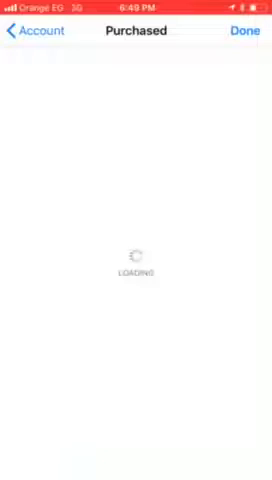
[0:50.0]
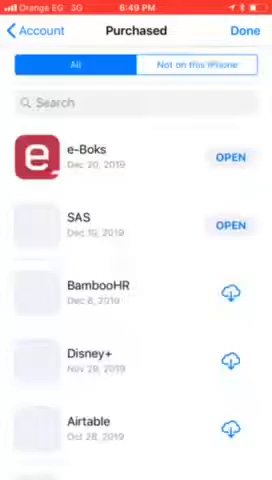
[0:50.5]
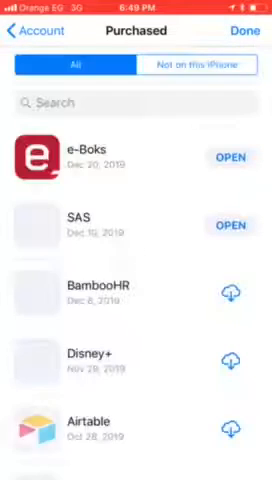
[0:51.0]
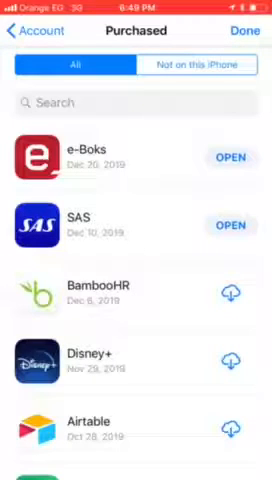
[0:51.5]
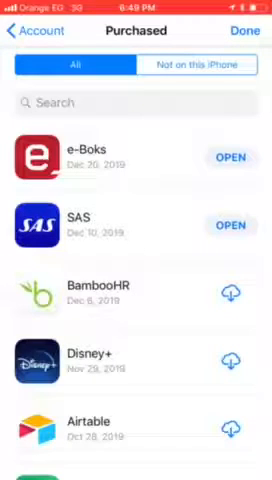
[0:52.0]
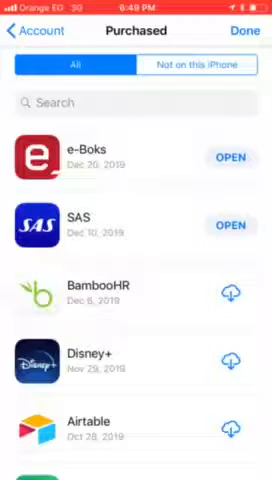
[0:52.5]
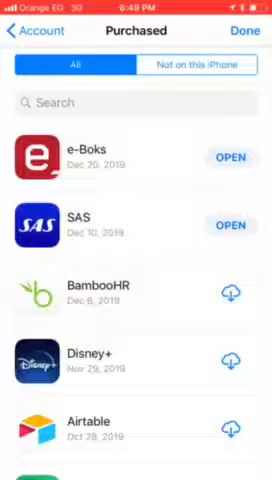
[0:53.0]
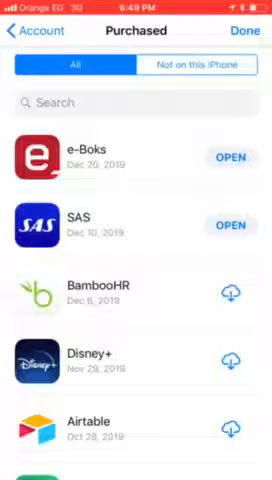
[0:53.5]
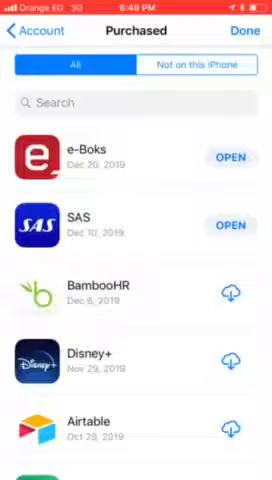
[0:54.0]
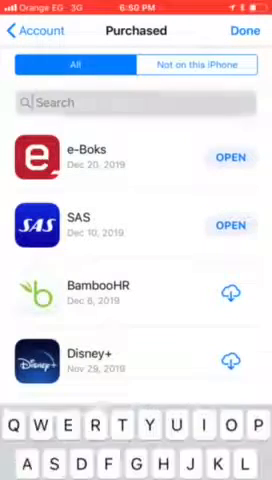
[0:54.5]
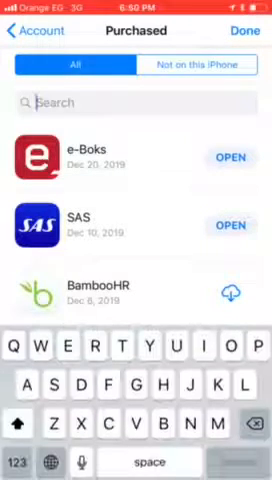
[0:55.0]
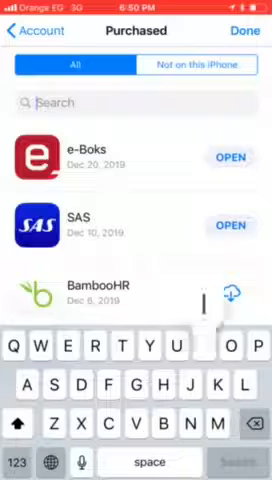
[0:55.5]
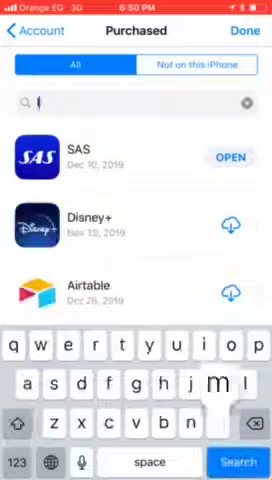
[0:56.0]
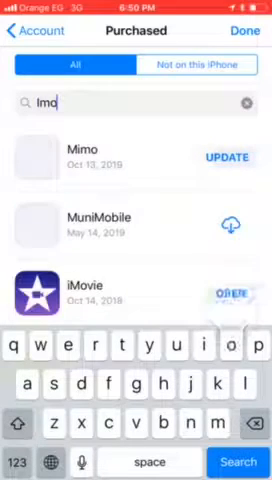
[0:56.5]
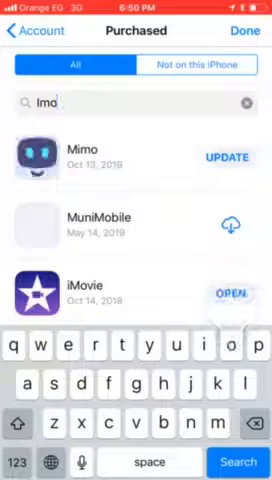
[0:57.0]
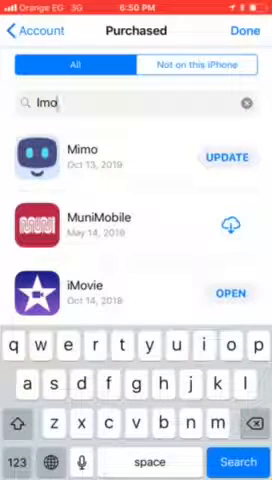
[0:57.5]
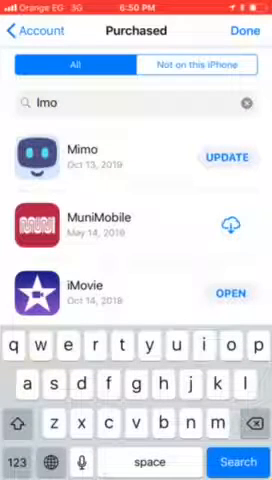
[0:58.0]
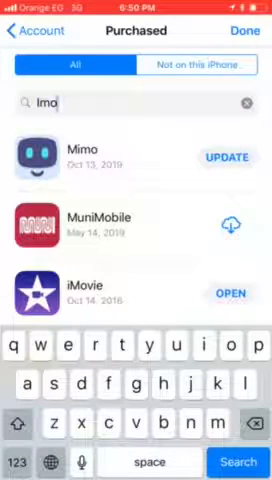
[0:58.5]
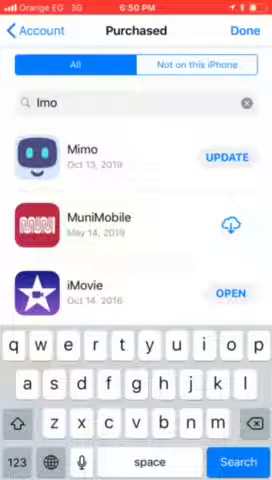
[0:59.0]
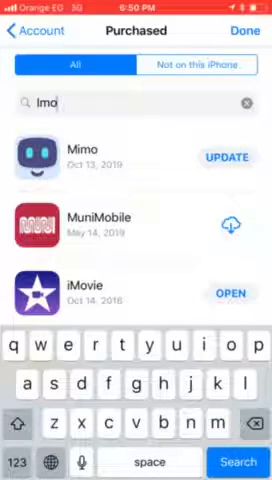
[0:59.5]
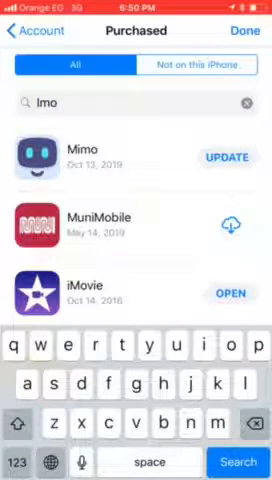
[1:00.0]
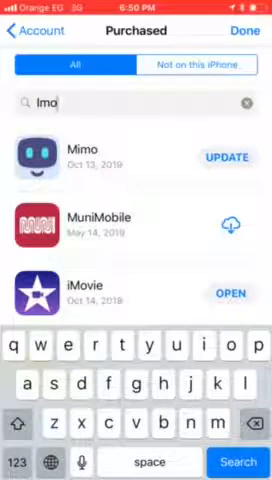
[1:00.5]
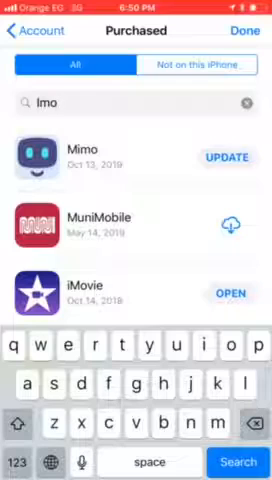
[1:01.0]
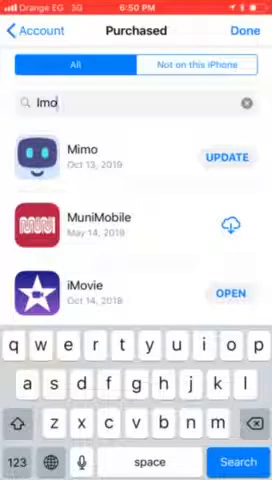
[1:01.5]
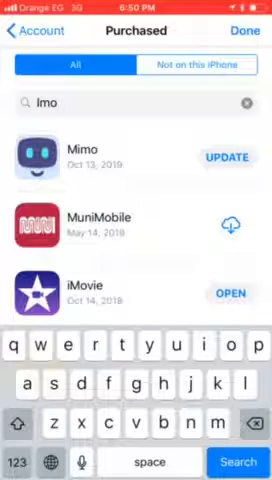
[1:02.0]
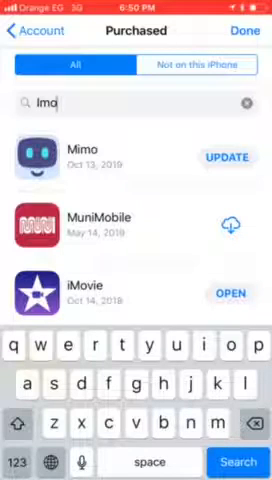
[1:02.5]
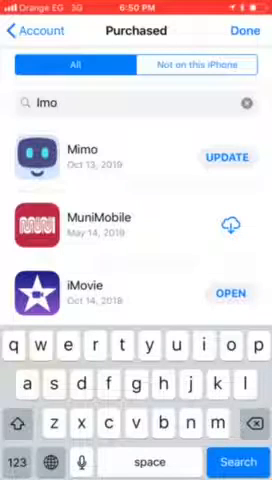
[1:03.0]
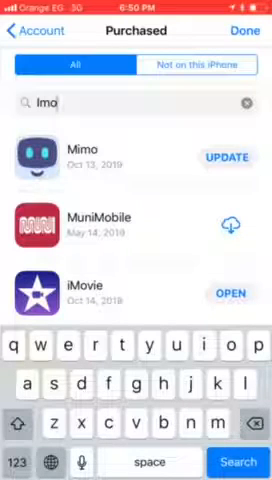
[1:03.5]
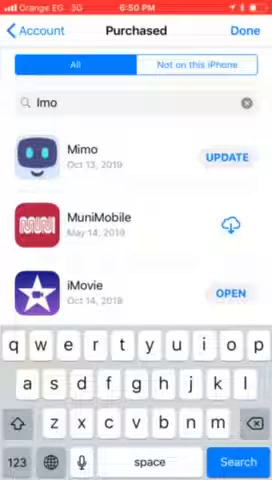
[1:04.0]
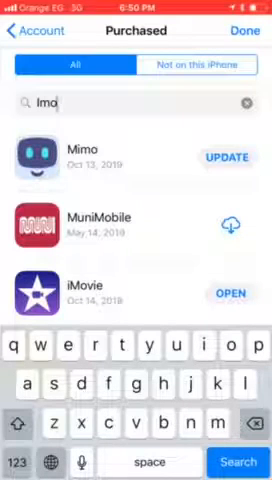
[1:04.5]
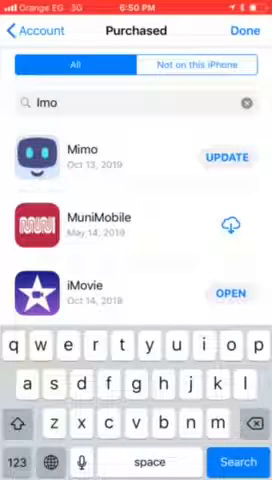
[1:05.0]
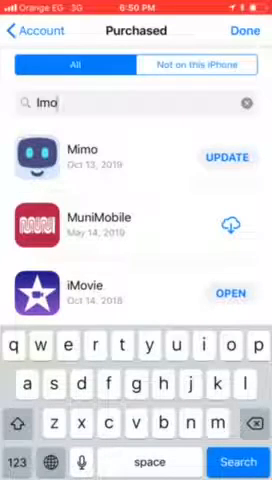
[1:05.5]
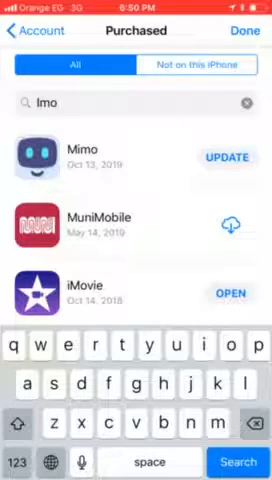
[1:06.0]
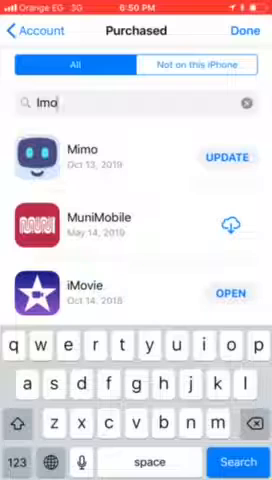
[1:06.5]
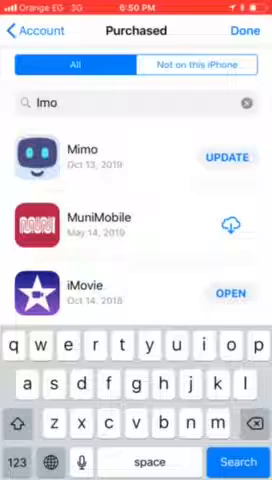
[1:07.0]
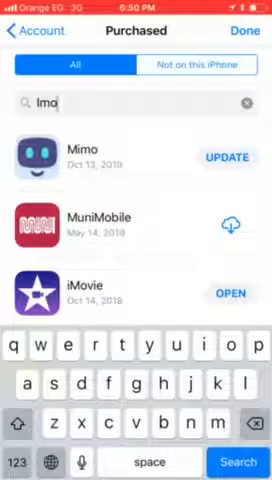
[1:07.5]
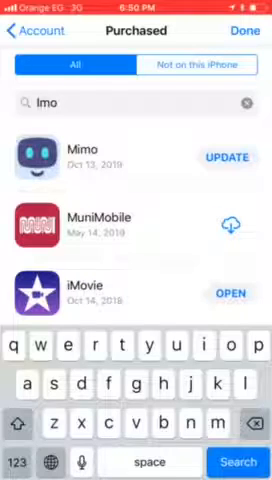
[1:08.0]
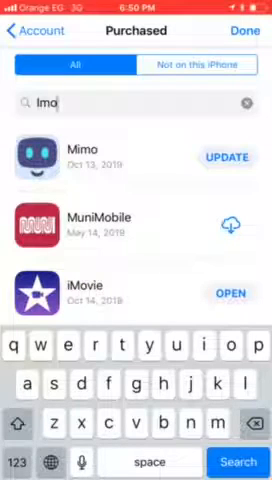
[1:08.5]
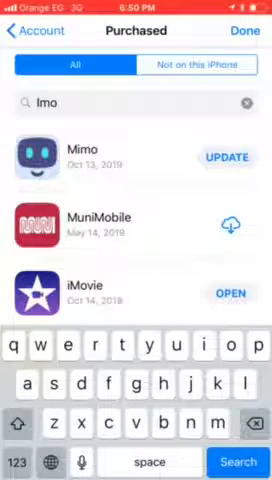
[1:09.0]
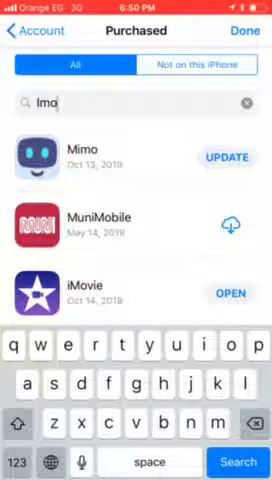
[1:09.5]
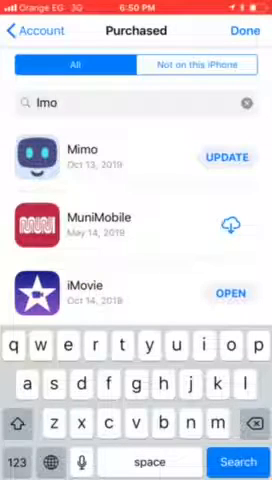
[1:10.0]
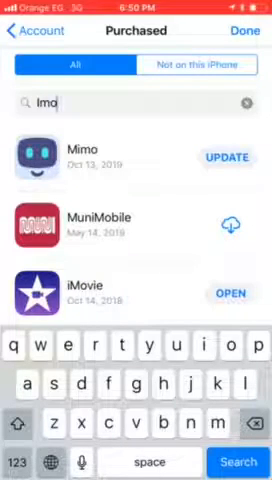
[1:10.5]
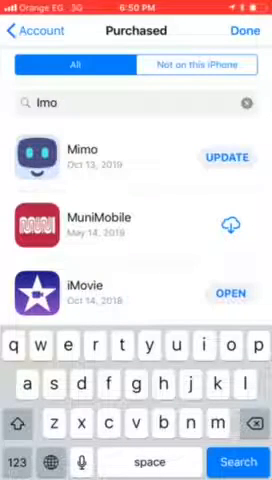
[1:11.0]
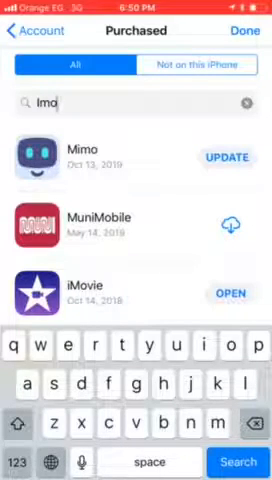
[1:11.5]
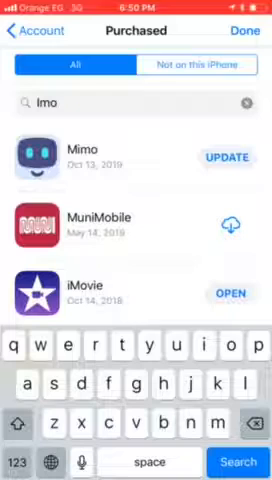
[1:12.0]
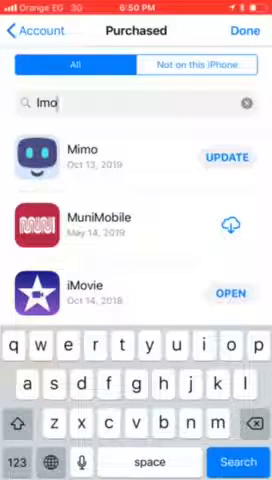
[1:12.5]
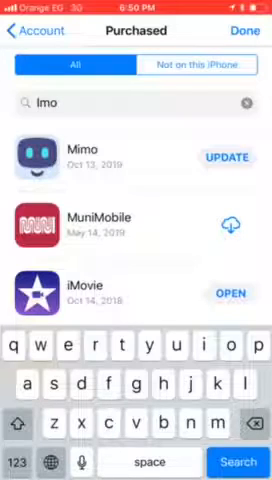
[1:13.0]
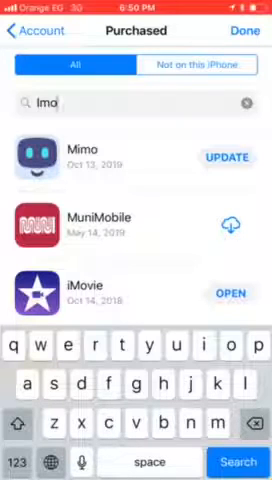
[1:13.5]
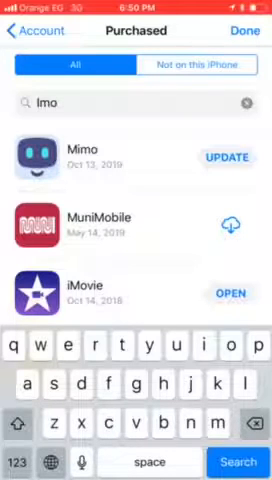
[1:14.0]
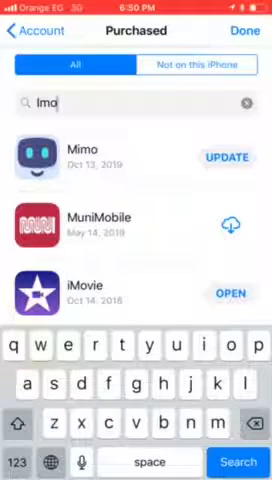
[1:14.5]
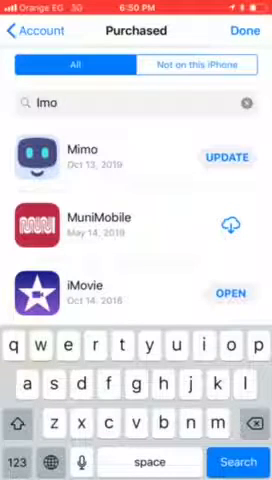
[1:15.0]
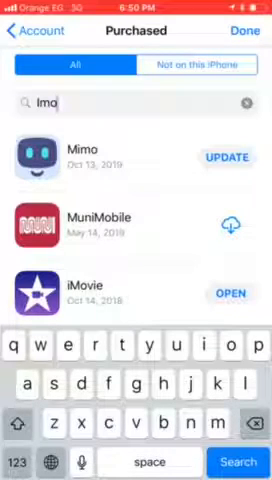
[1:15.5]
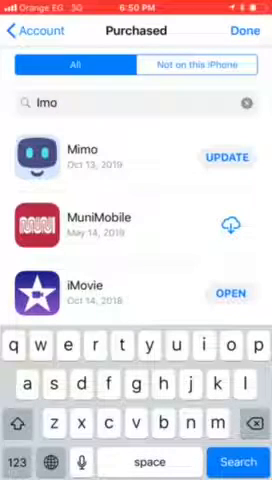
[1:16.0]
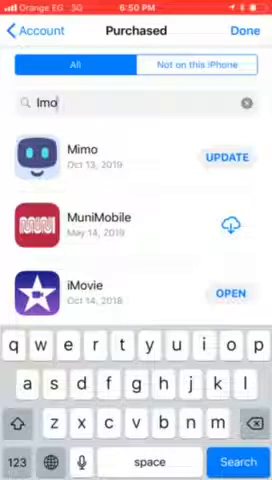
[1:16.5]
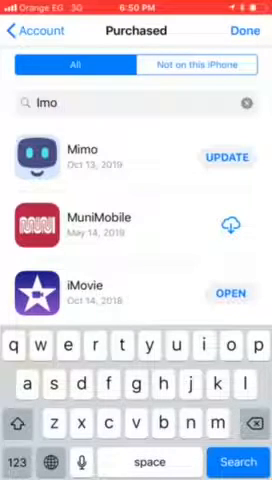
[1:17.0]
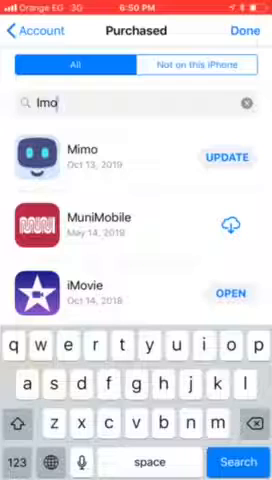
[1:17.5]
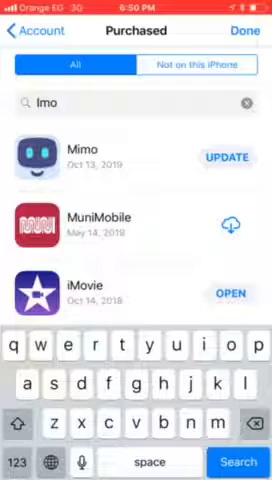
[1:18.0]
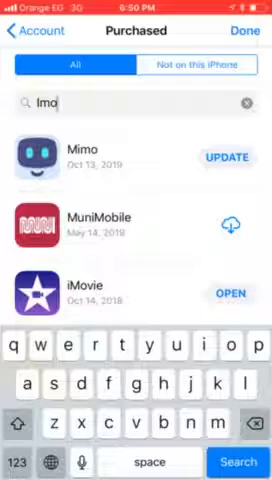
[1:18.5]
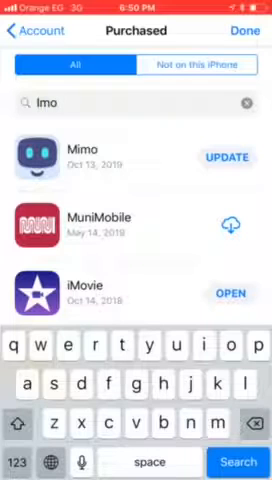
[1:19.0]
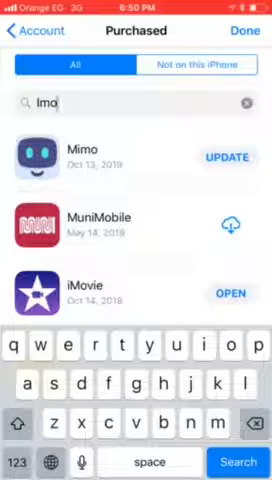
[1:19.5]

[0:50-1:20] The purchases page lists the apps the user has purchased, with options for all apps and for apps not on this device, and a search bar for typing in an app. Before anything is typed, the list shows Leebox with an option to open, SAS with an option to open, BambooHR with an option to re-download, Disney Plus with an option to download, and Airtable with an option to re-download. The user then types "IMO" on the keyboard below, apparently meaning iMovie. Several apps pop up, including Uno with an option to update, MoneyMobile with an option to re-download, and the iMovie app being searched for, which has an option to open.